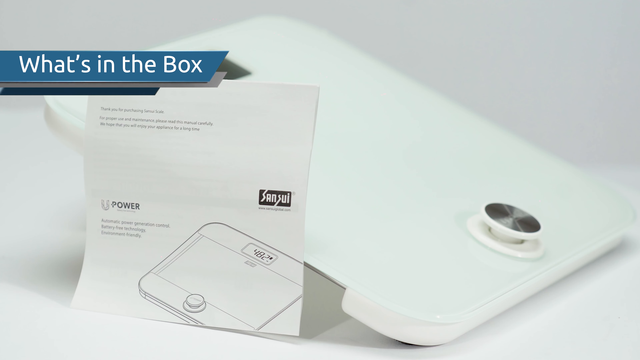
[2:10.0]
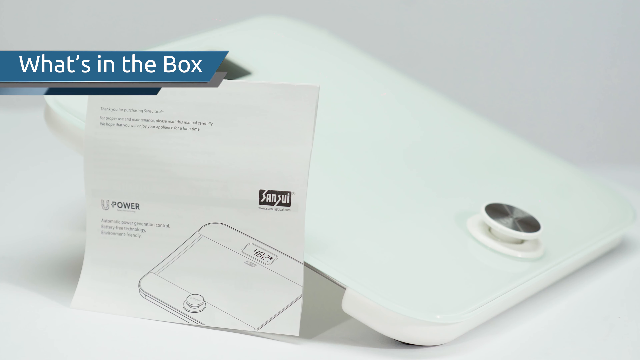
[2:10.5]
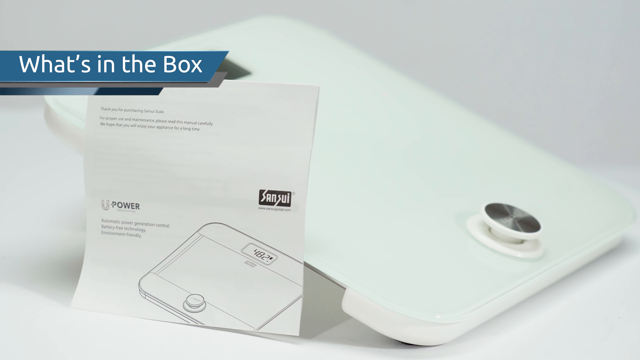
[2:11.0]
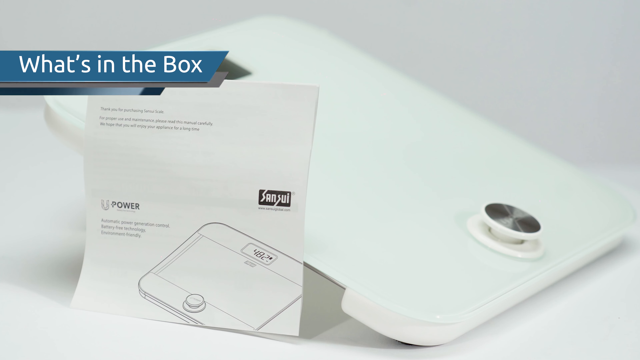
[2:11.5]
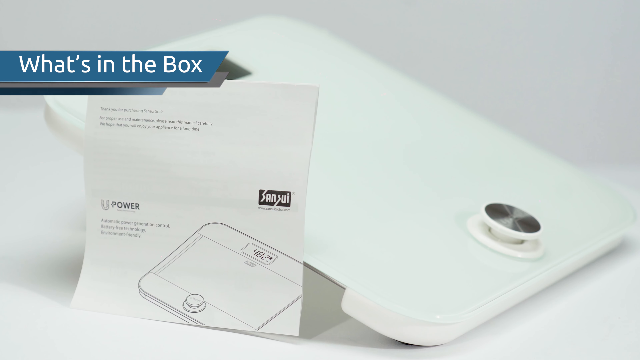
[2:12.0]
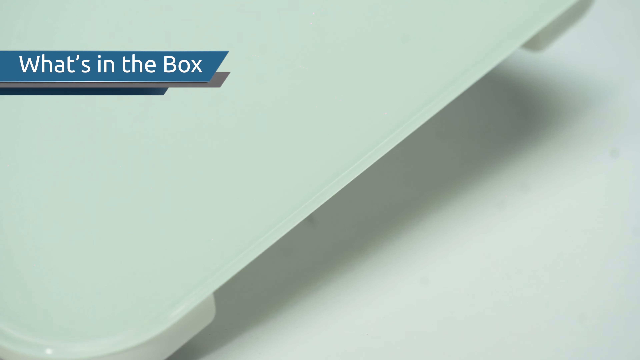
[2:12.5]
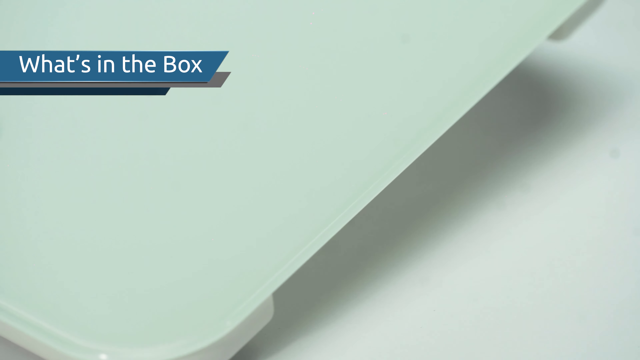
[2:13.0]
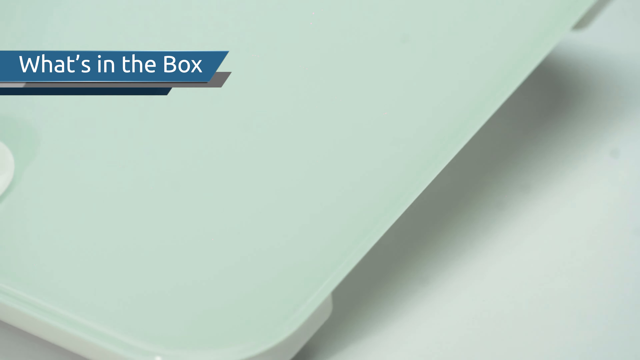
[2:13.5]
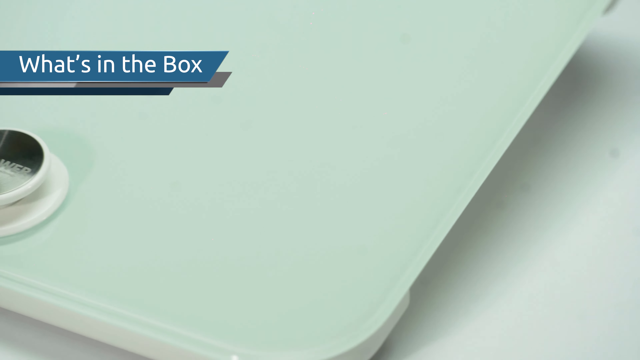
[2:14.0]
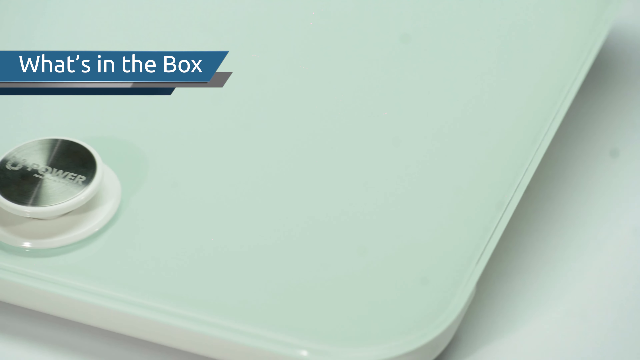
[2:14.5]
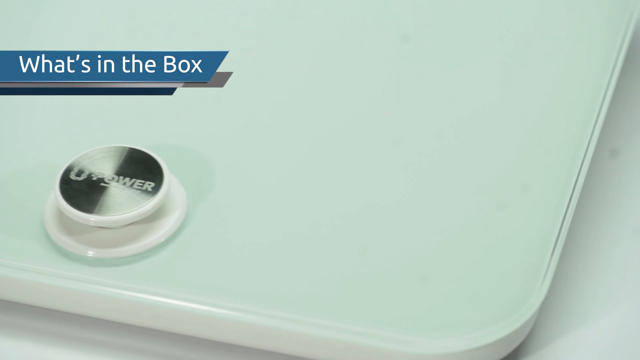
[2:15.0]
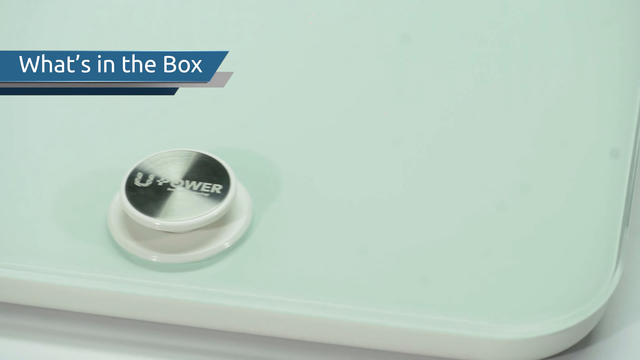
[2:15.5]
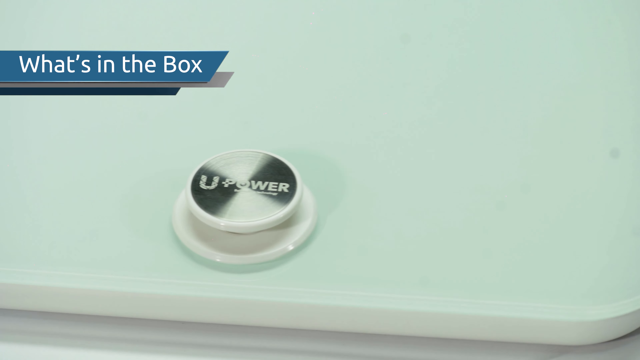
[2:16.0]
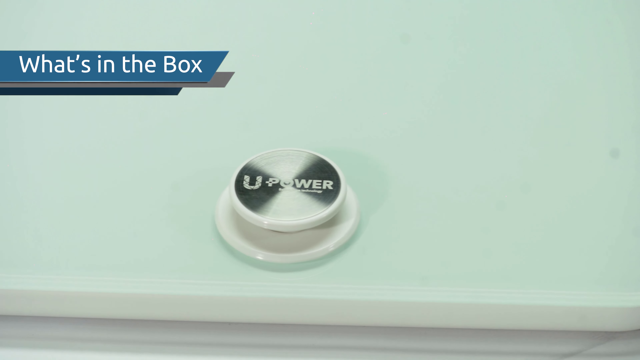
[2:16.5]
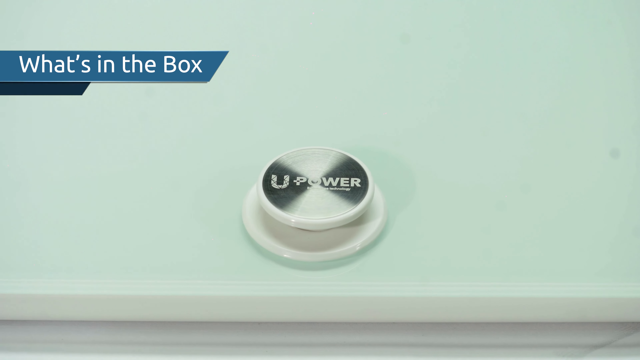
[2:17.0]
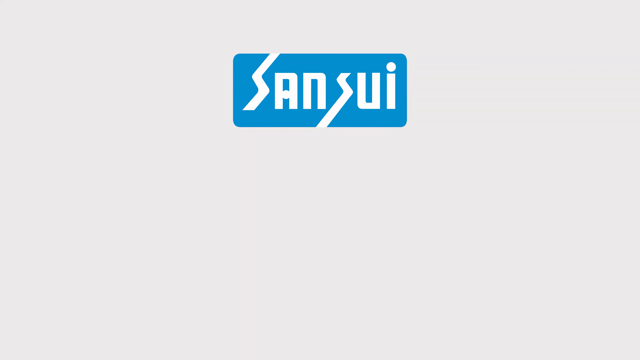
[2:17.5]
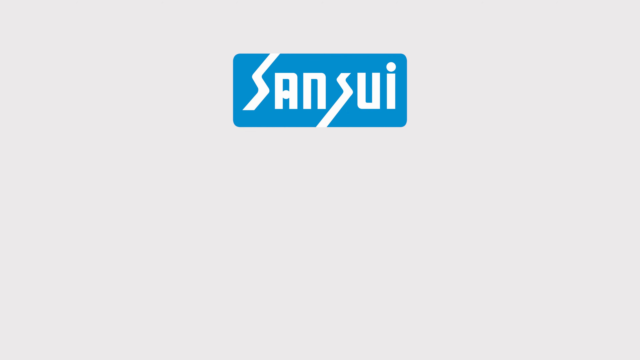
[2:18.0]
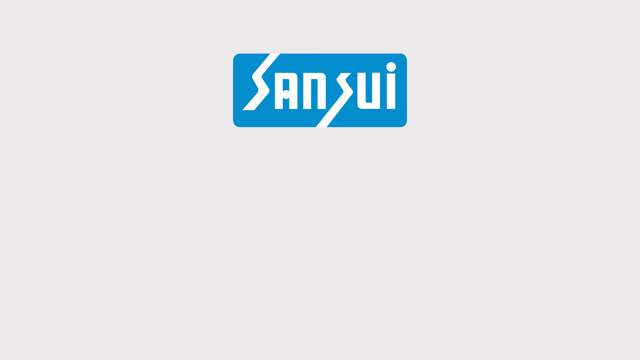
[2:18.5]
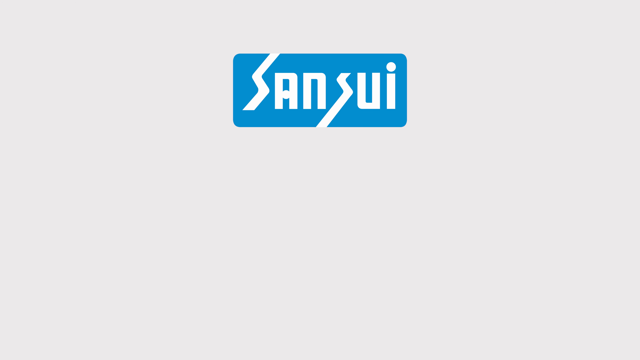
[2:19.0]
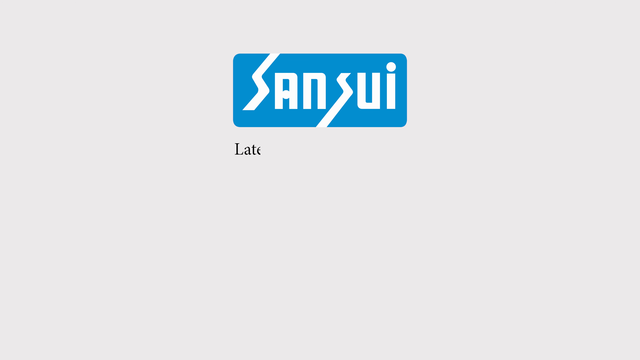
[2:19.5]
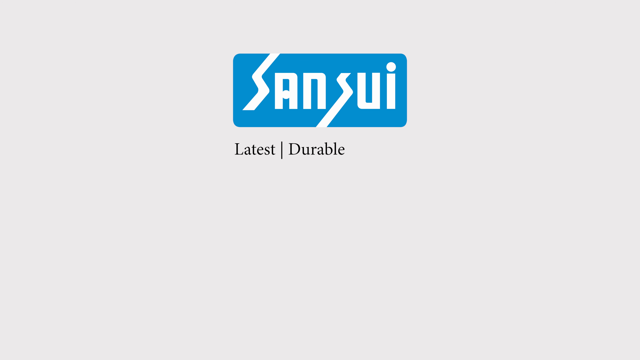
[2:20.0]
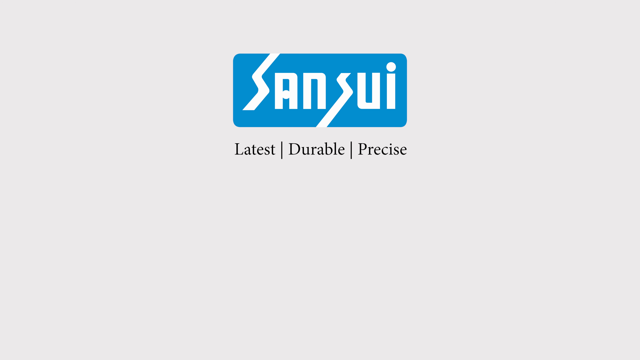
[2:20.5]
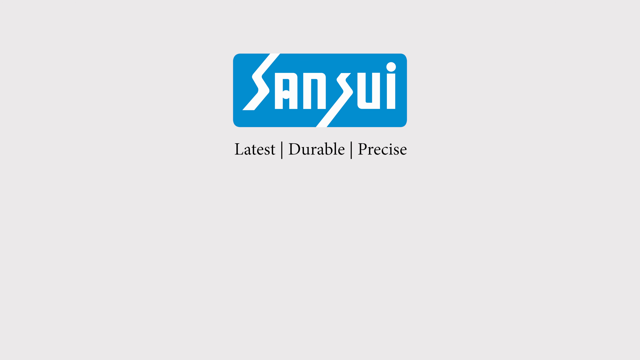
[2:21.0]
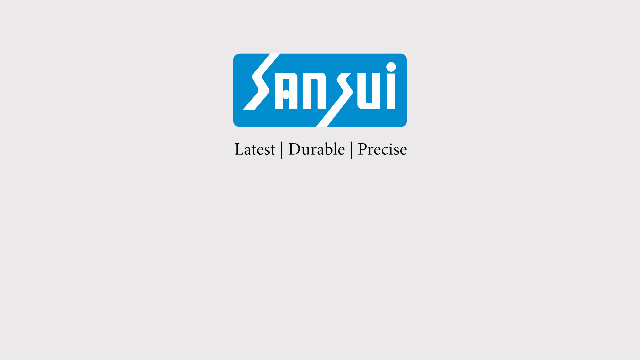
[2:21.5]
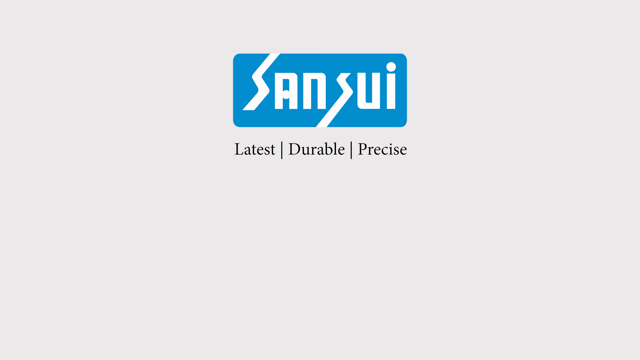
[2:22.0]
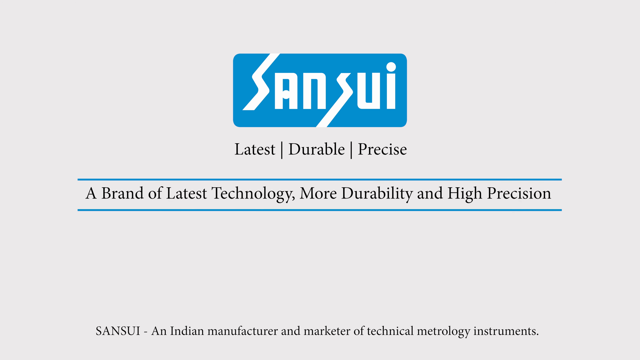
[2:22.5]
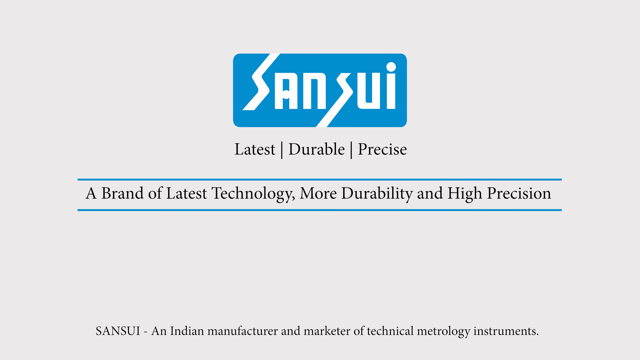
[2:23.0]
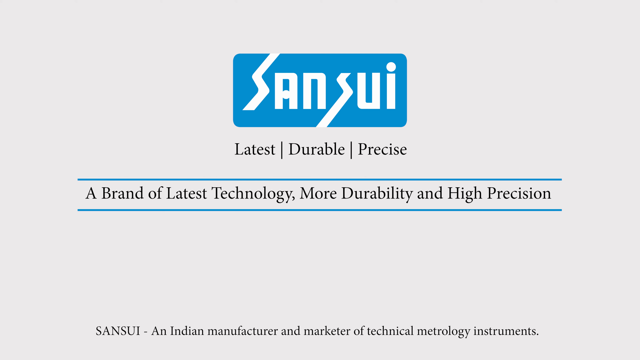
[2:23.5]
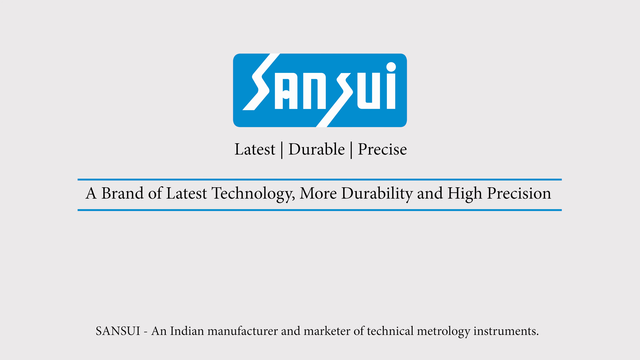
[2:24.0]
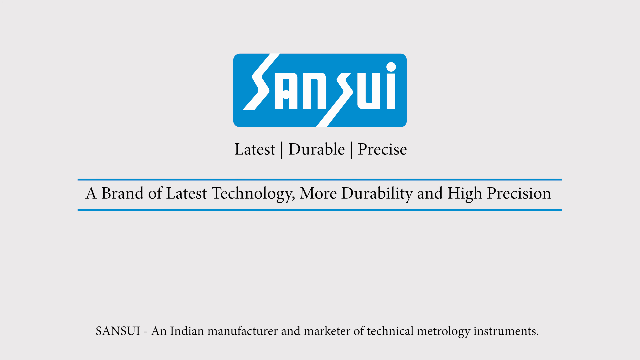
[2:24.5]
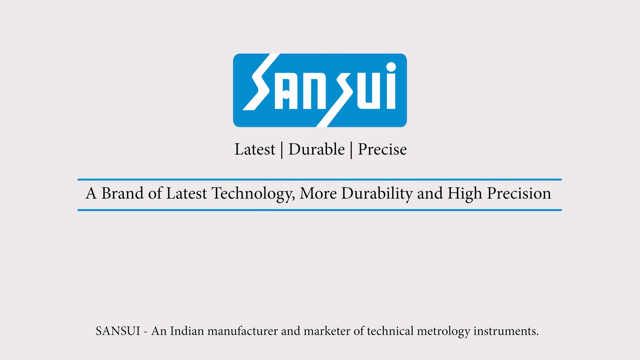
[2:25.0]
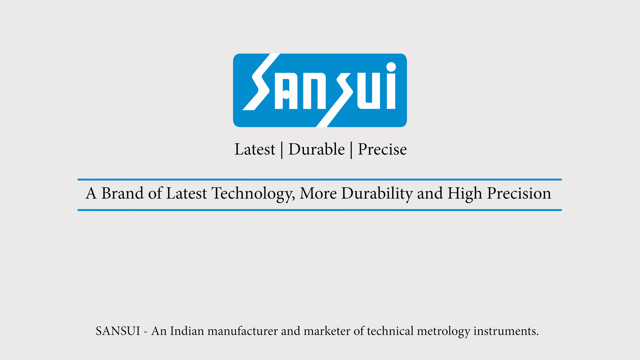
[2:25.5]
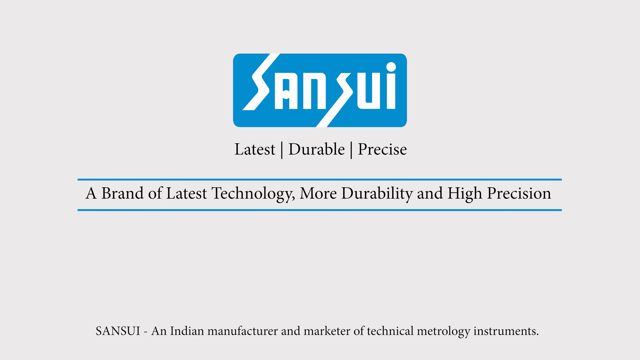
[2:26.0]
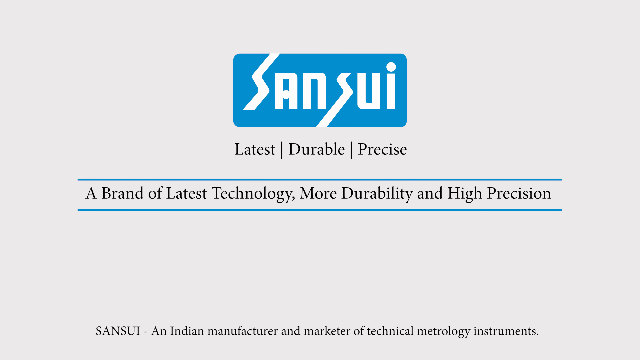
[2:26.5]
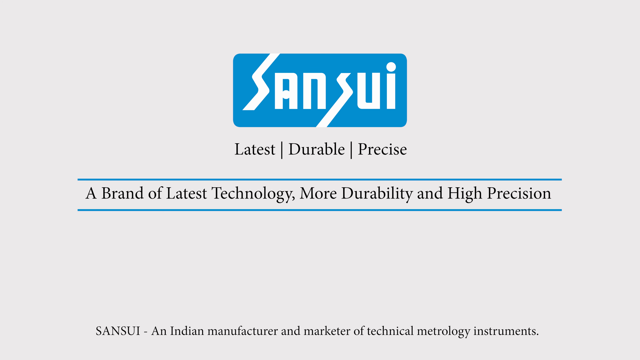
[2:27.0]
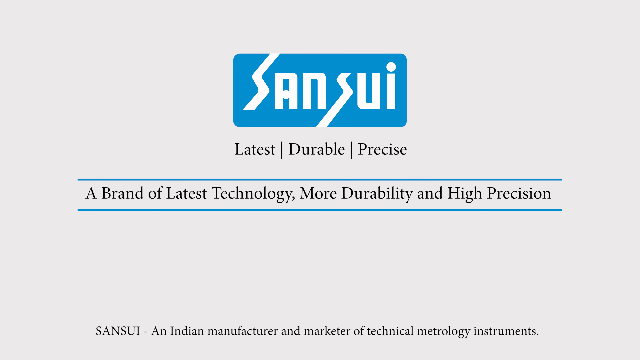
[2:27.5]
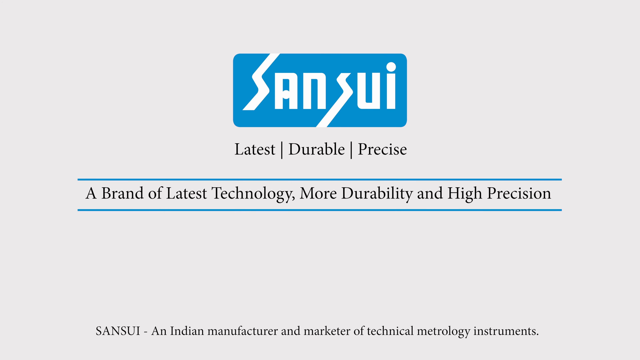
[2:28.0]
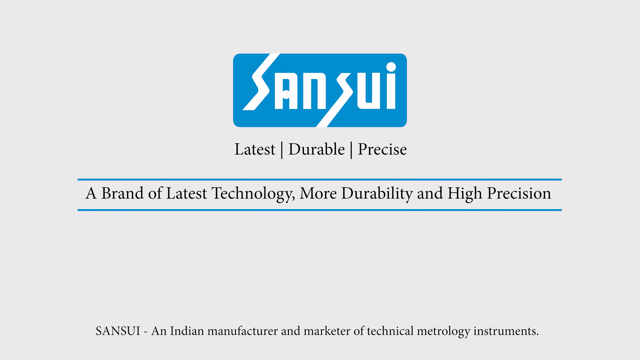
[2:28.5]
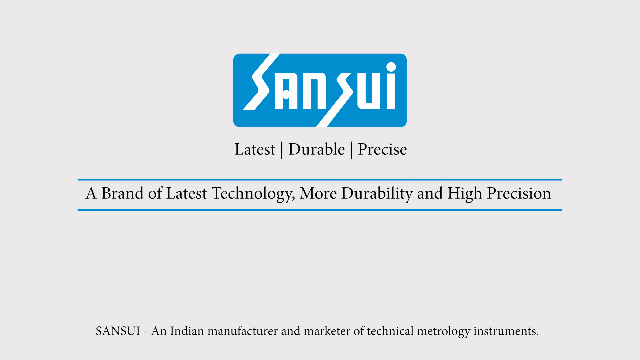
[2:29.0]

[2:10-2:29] An image of white scales is shown. "Sansui" appears on the screen in white writing on a blue background, apparently a logo with the letters S-A-N-S-U-I. Underneath the logo are the words "latest, durable, precise", and underneath these the words "a brand of latest technology, more durable, and high precision". The video then moves to the words "Battery-Free Personal Scale" and "to discover your body weight for ensuring fitness", in black and blue. An image of the scales follows, which appear to be opened up so that one side is black and one side is white. A front-on image shows the scales, which appear to have a button on the bottom part. A woman uses her foot to activate this button, and the activation is shown with some sparkles. A woman is then shown standing on the scales with her feet.